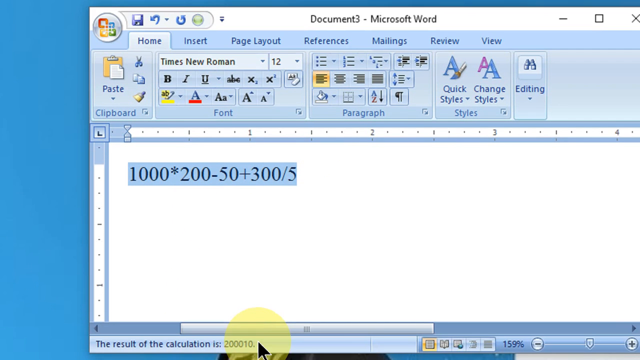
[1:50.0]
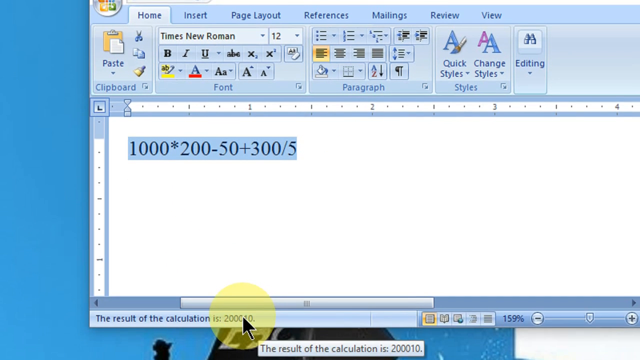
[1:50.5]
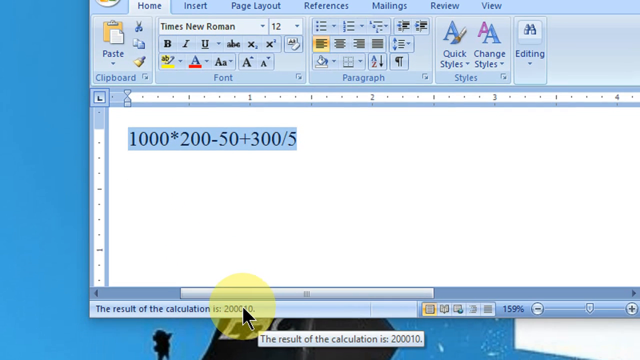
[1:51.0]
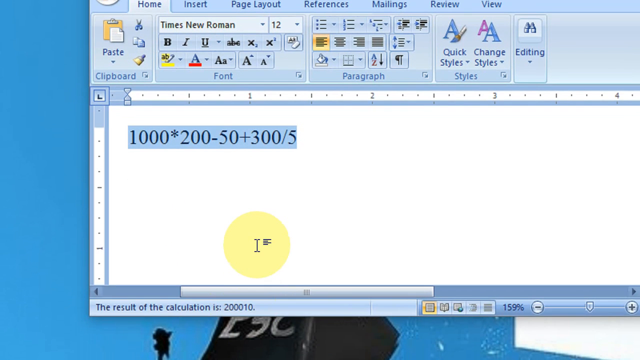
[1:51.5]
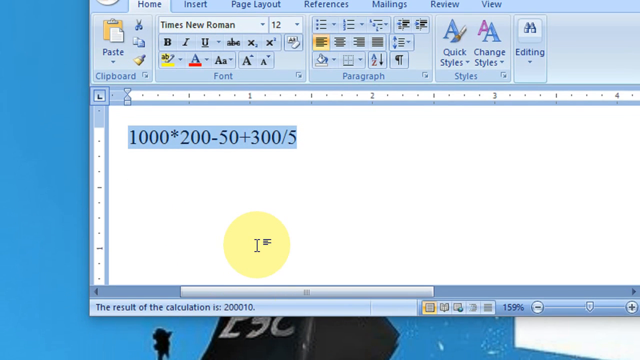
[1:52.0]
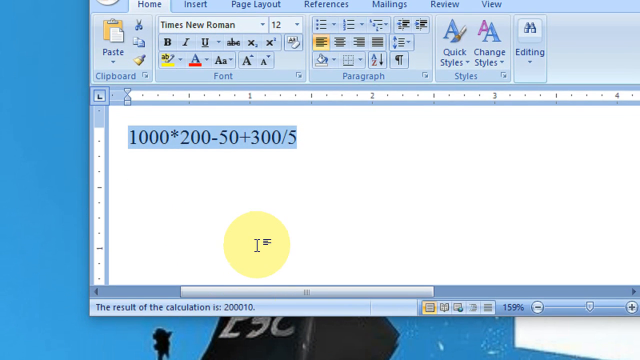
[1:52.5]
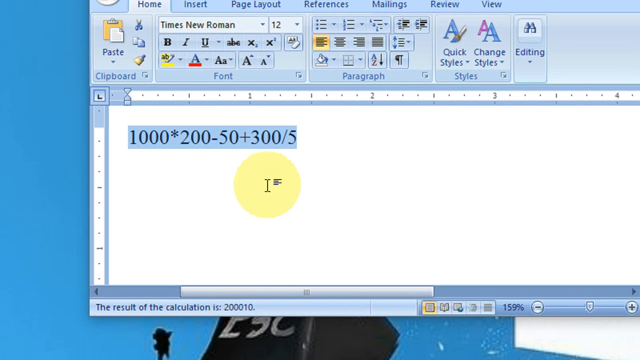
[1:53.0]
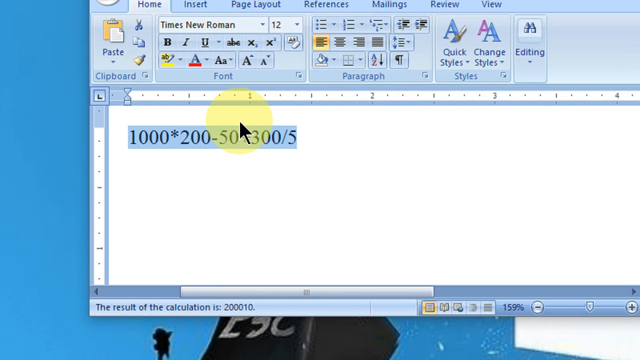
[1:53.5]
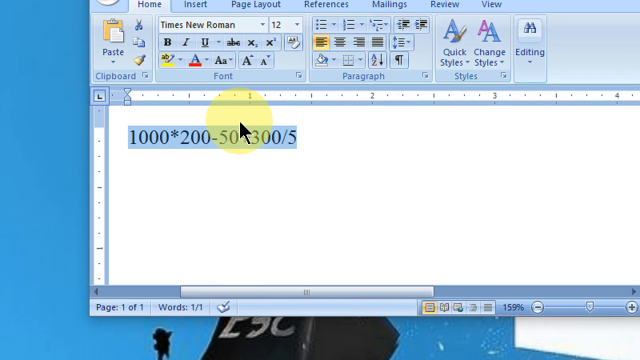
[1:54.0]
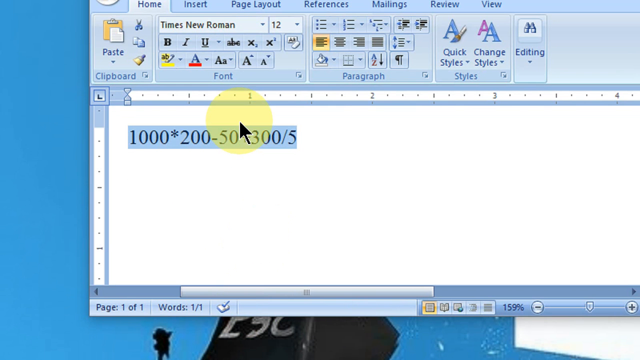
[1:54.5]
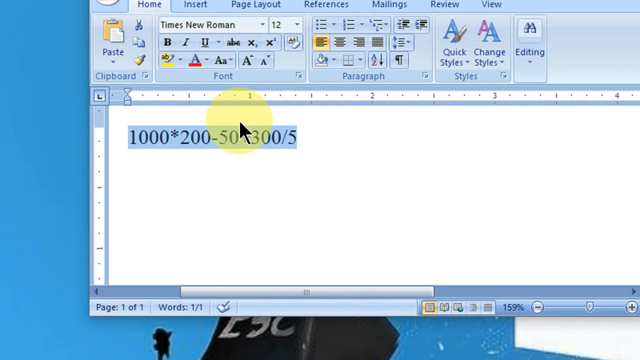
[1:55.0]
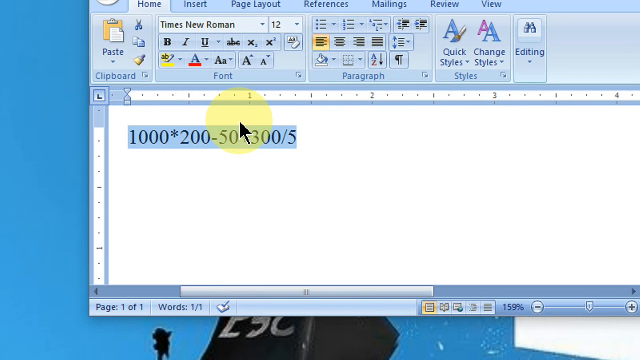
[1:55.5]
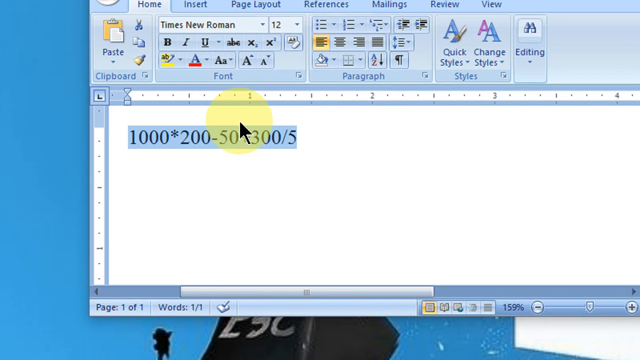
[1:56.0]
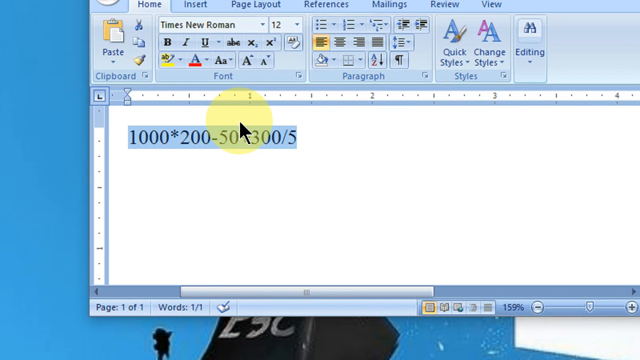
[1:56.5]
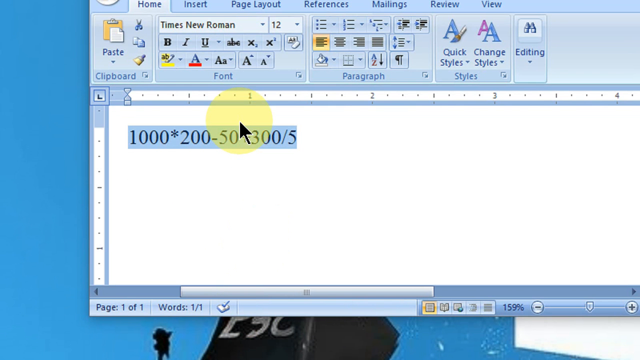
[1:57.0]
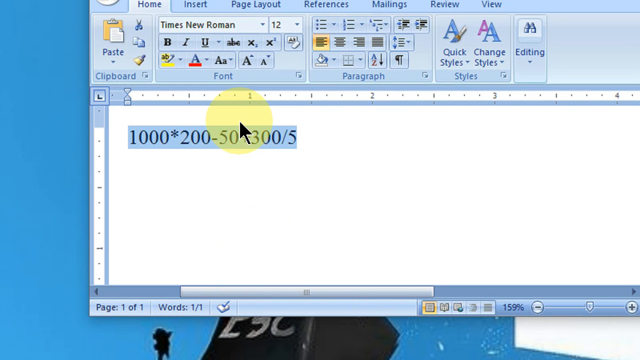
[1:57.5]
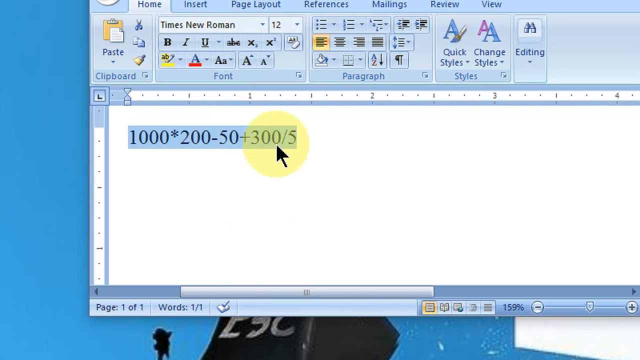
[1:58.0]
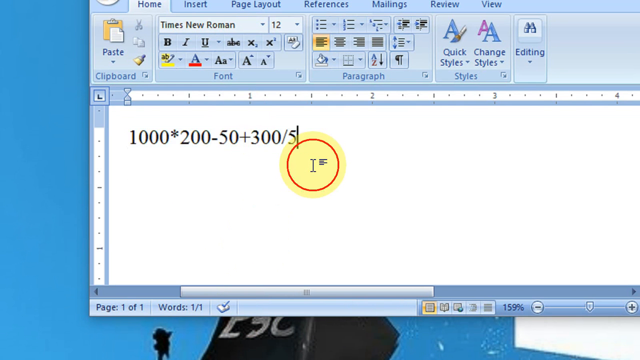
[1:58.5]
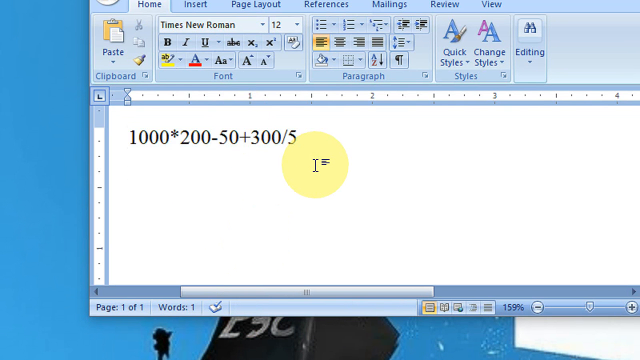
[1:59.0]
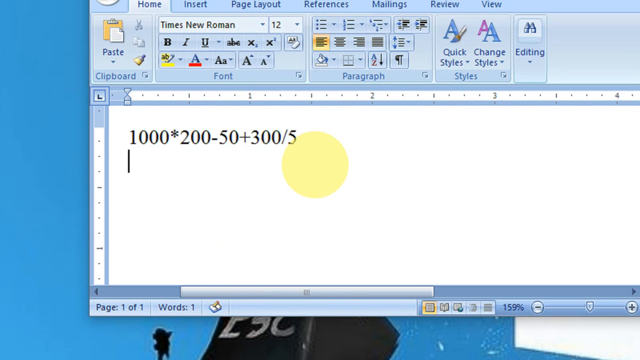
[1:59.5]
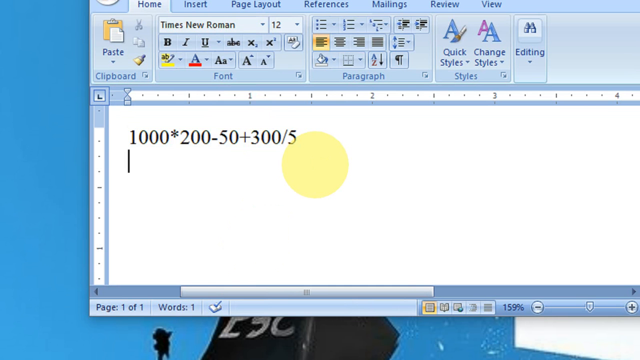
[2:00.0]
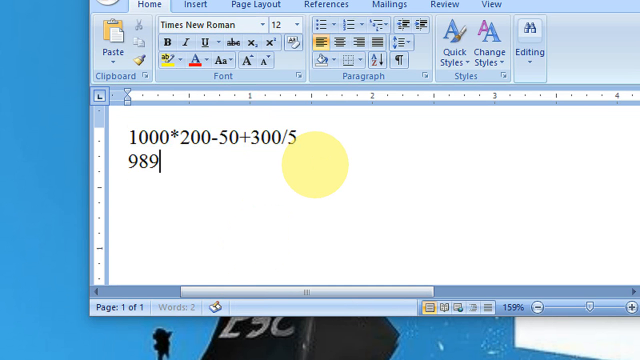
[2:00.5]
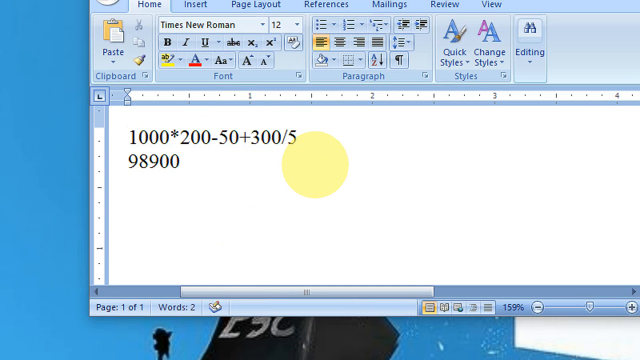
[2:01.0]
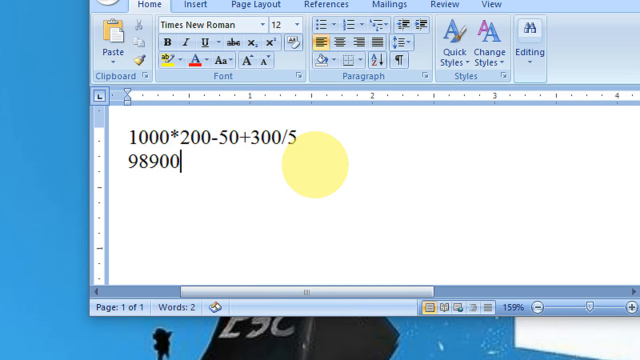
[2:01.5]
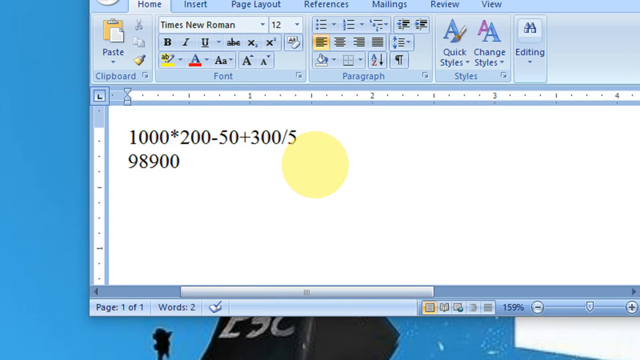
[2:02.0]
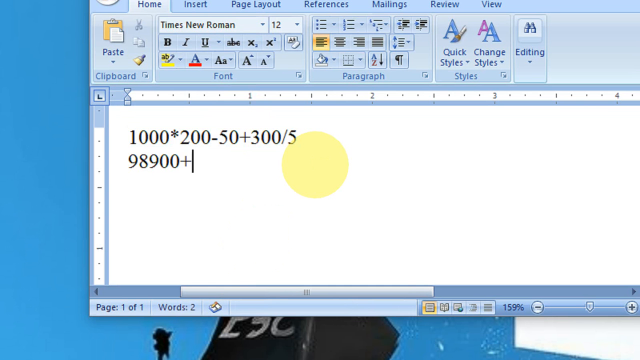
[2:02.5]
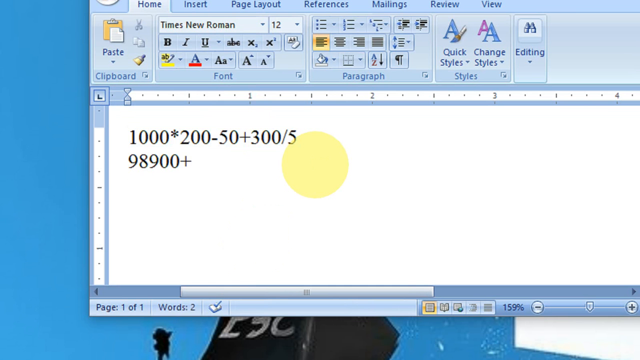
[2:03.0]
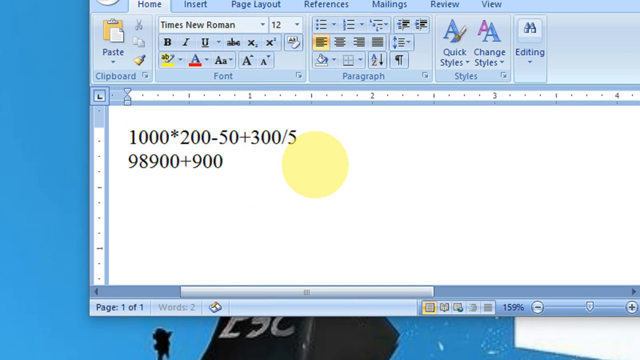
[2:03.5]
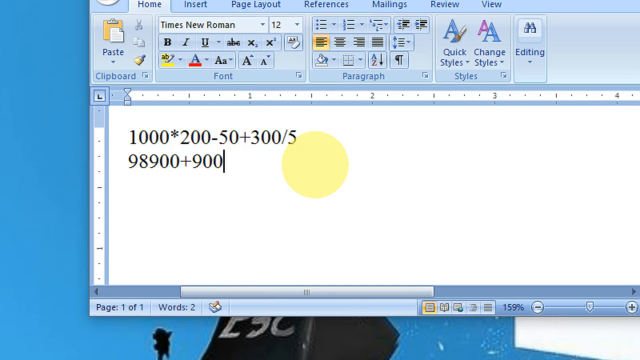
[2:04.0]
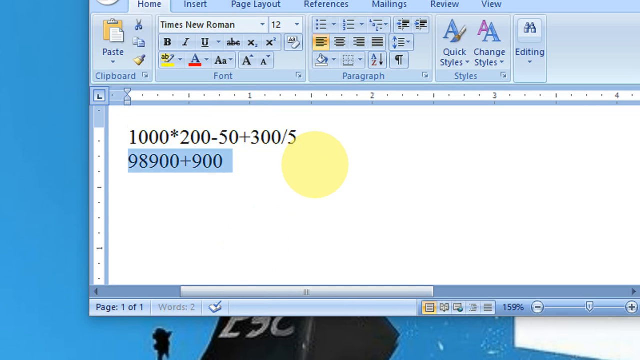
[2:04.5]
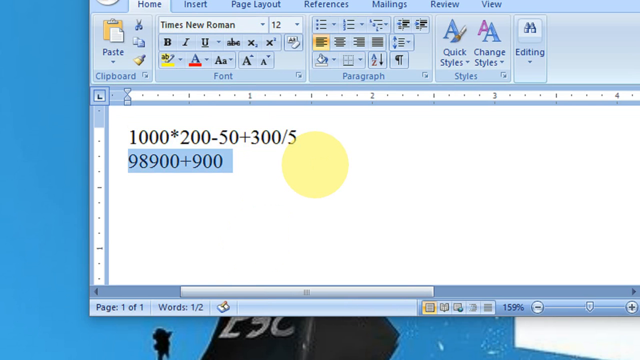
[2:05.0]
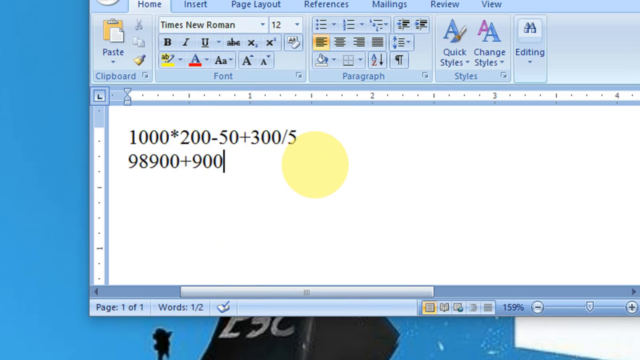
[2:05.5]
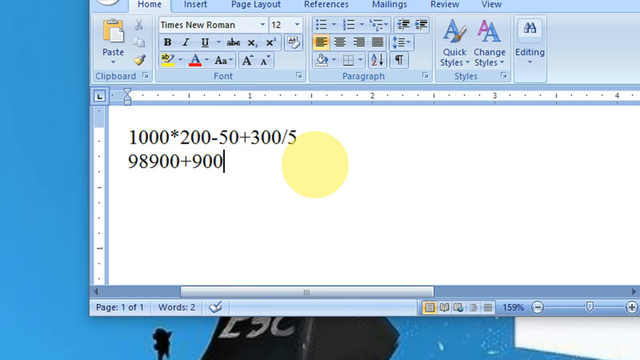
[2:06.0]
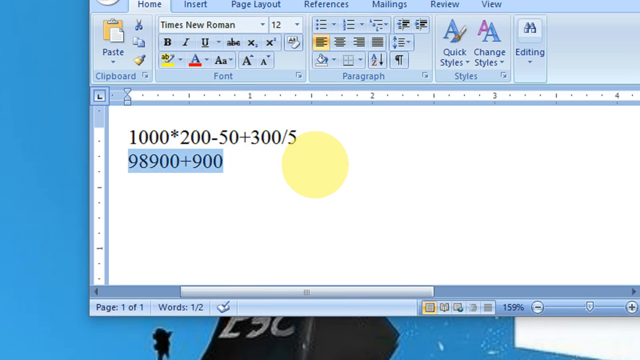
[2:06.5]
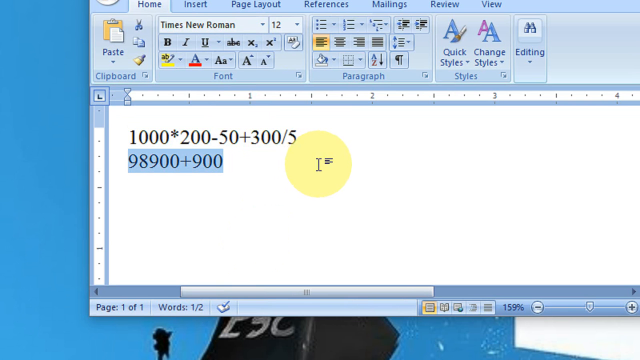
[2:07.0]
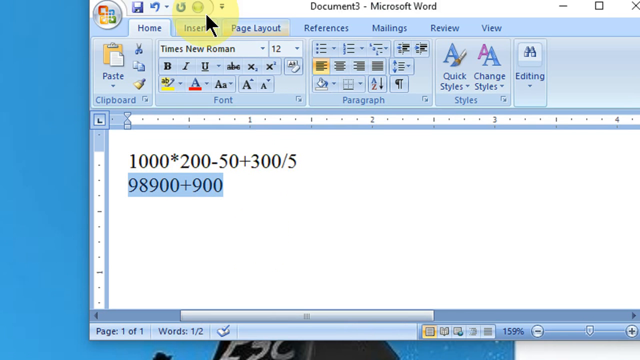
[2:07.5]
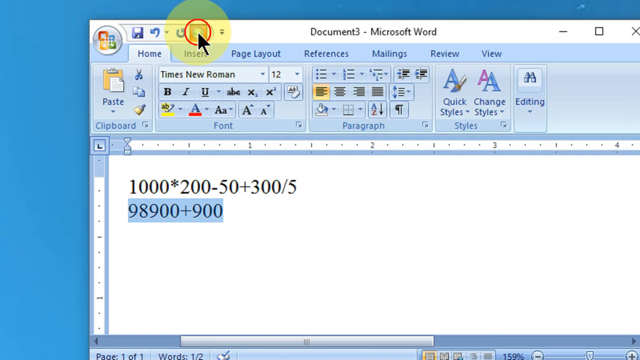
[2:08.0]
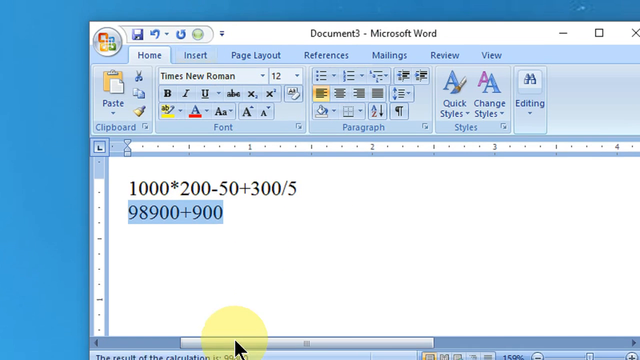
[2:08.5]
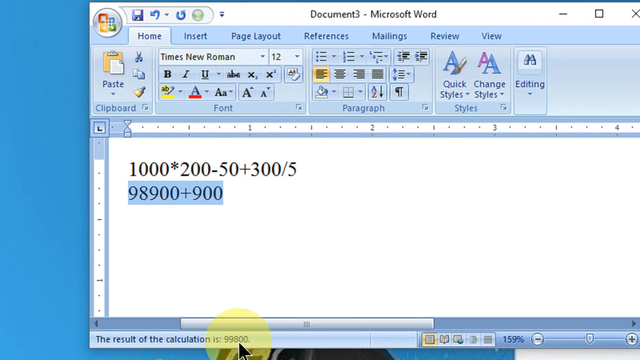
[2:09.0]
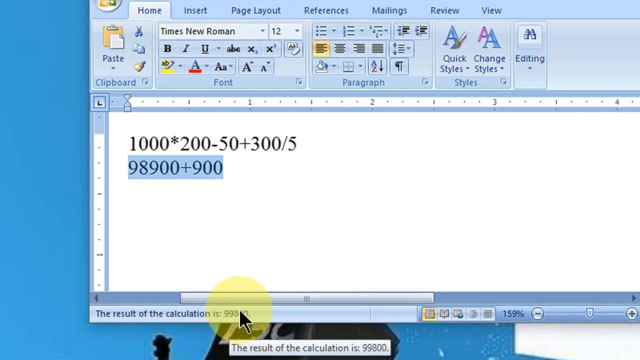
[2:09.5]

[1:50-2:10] The user clicks to the right of the line of text to remove the highlight, then presses the Enter key to move the cursor down to the line below. They type 98900 plus 900, highlight the entire line, and move the mouse cursor to the top left of the page, where they click an icon to the right of the Save, Undo and Redo buttons that is shaped like a globe. They then move the cursor to the bottom of the page, hovering over the result of the calculation, 99800, before moving the cursor back up to the text 98900 plus 900, which is still highlighted.